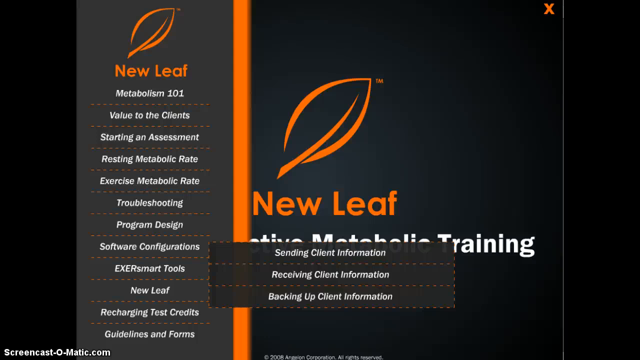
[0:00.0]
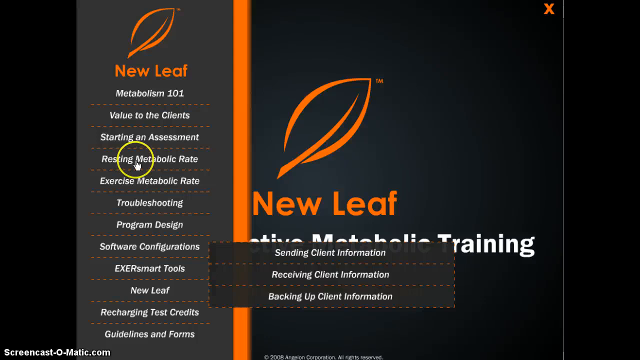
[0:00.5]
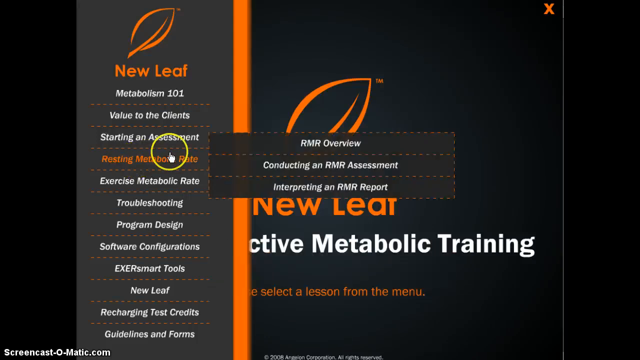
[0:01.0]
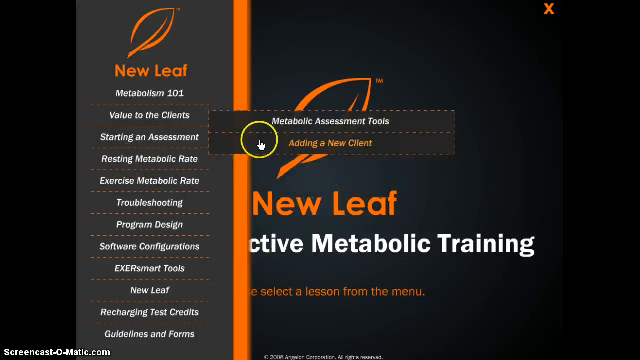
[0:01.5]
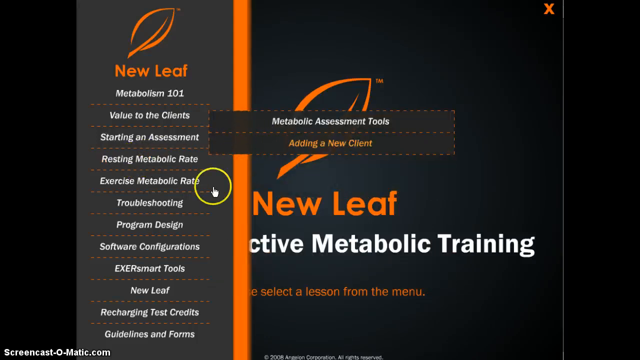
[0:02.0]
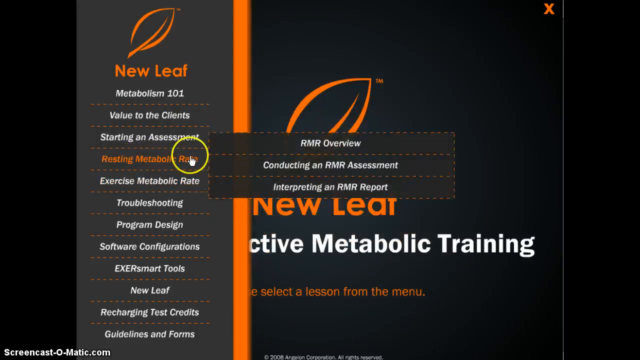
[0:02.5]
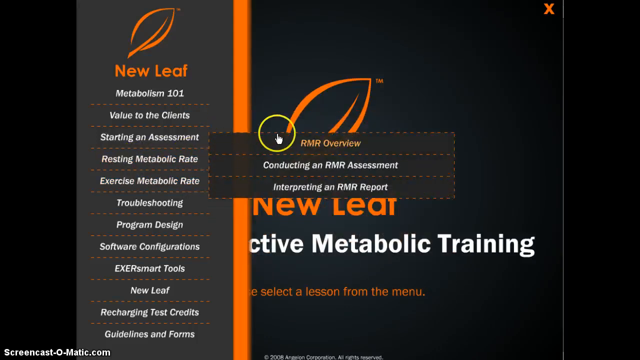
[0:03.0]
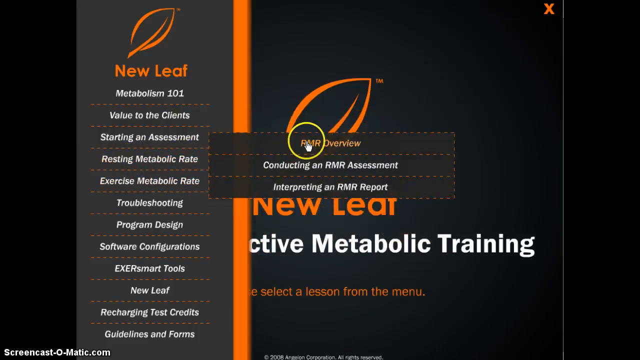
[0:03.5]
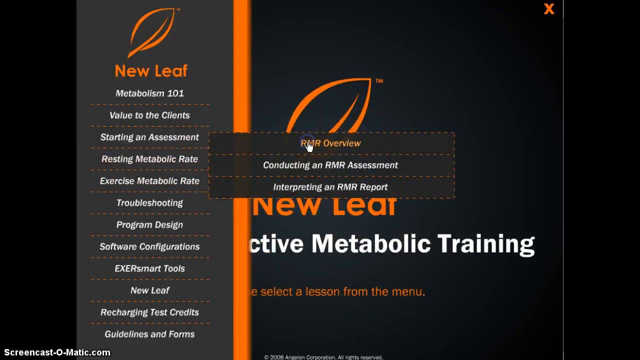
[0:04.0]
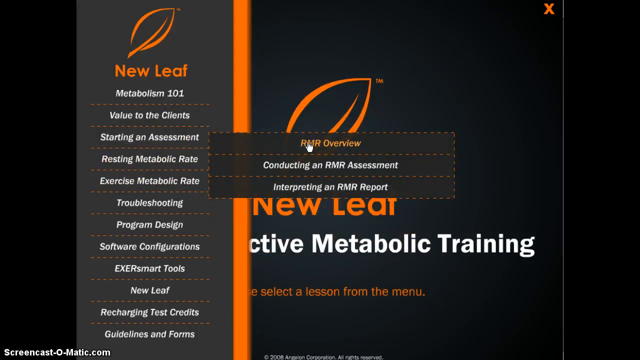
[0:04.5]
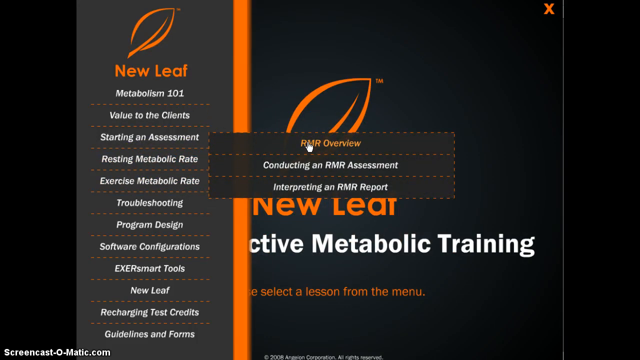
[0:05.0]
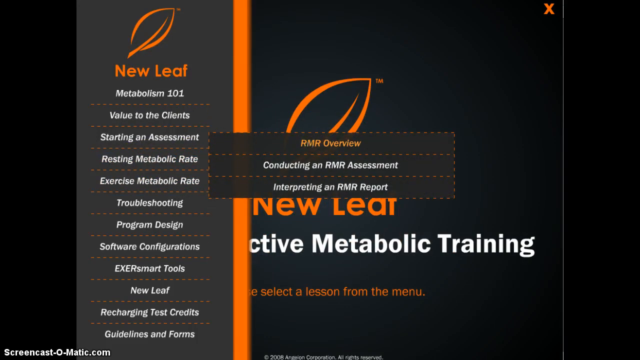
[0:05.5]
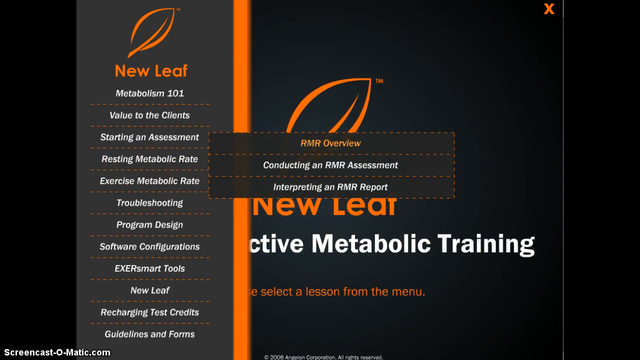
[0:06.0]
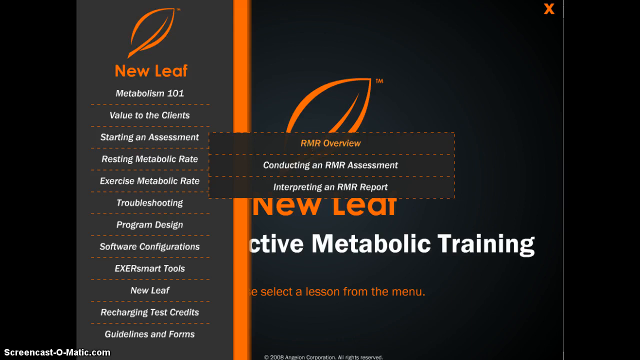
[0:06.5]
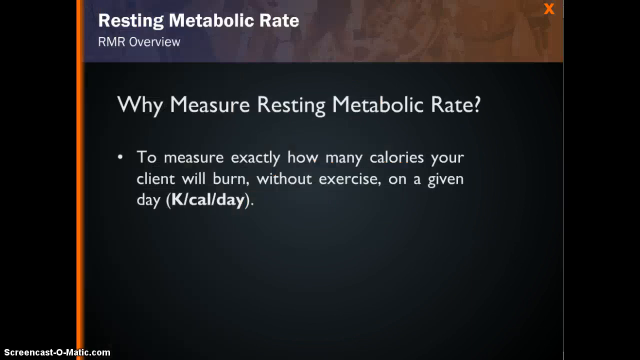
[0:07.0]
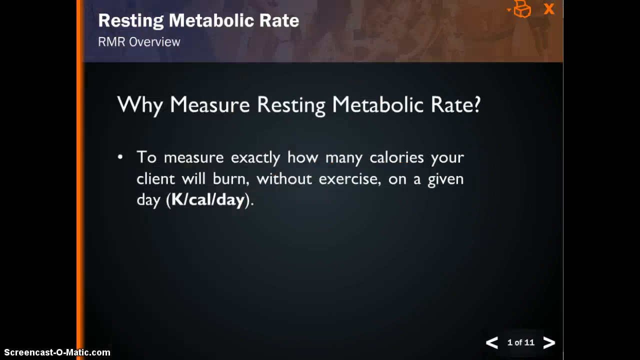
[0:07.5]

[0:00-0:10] A slide that says "metabolic training" opens the video, with categories on the left side relating to metabolism and different programs. A yellow circle appears on top of one of the categories, resting metabolic weight, and follows the cursor as it moves. The user goes through the different categories, scrolling through the pop-up options on each, then clicks an option that says "RMR overview". A PowerPoint-style slide appears about why it is important to measure resting metabolic rate, noting that it shows how many calories a client will burn without exercise on a given day.